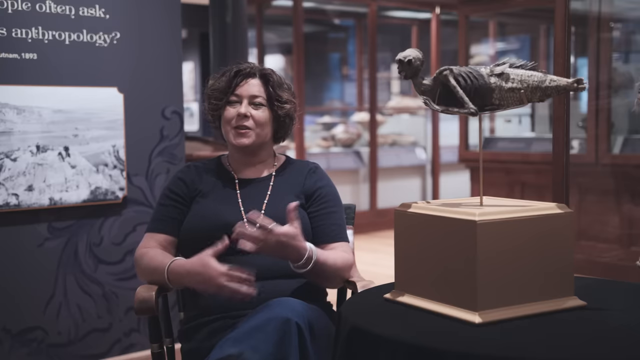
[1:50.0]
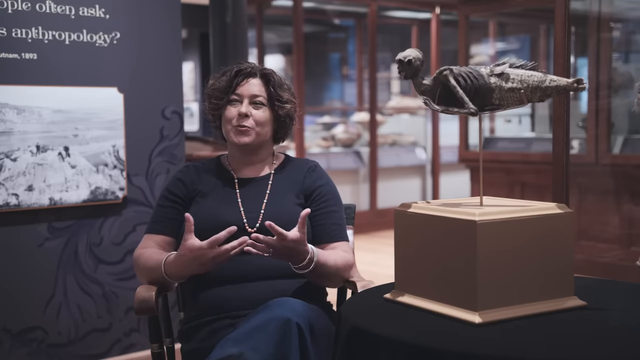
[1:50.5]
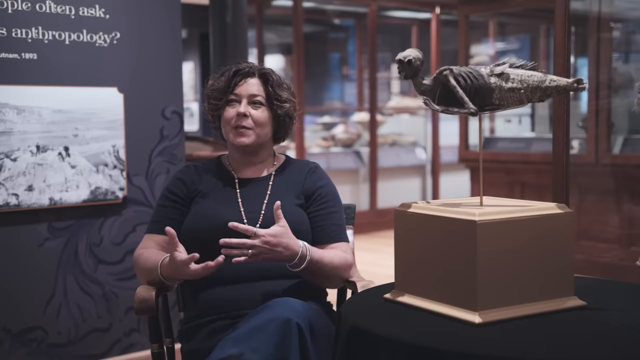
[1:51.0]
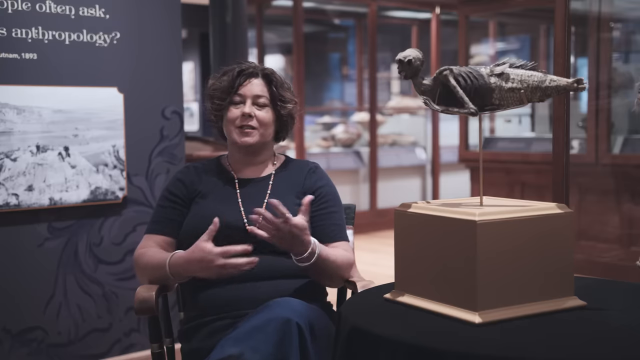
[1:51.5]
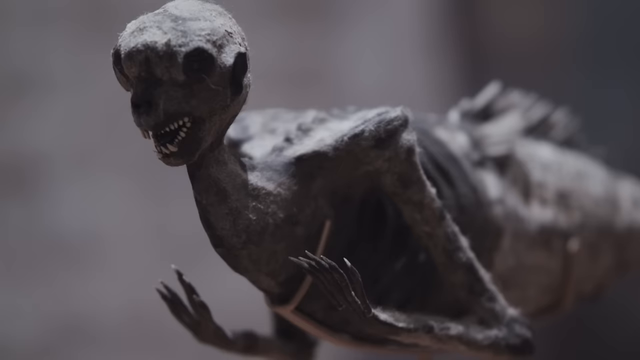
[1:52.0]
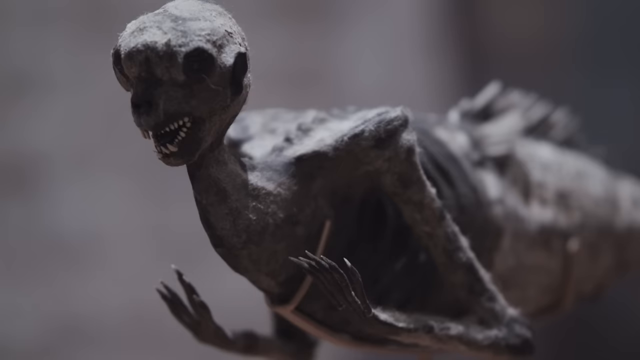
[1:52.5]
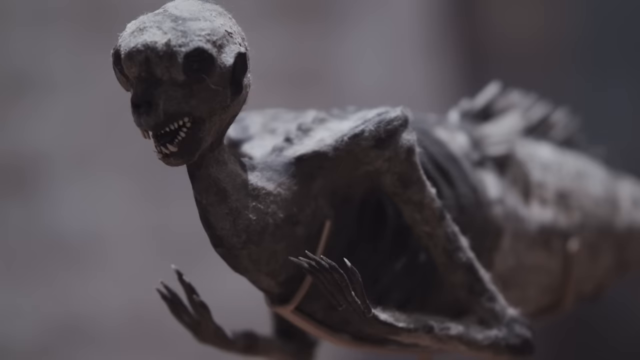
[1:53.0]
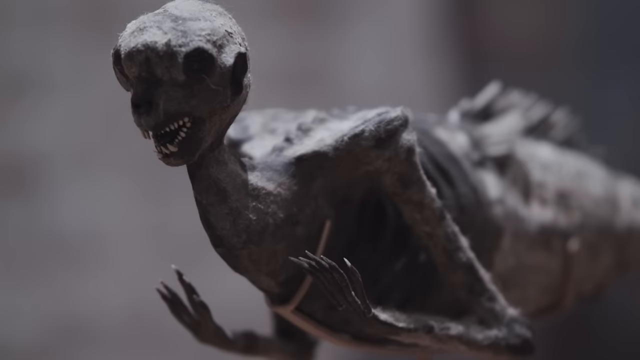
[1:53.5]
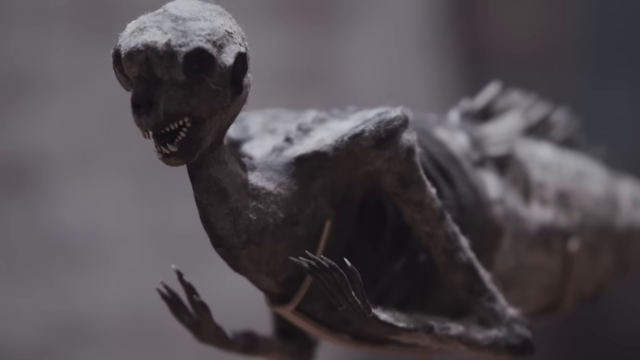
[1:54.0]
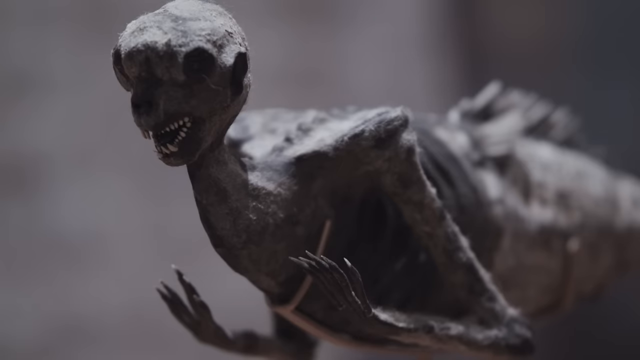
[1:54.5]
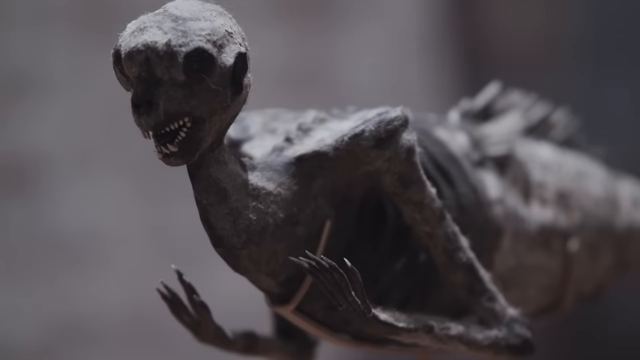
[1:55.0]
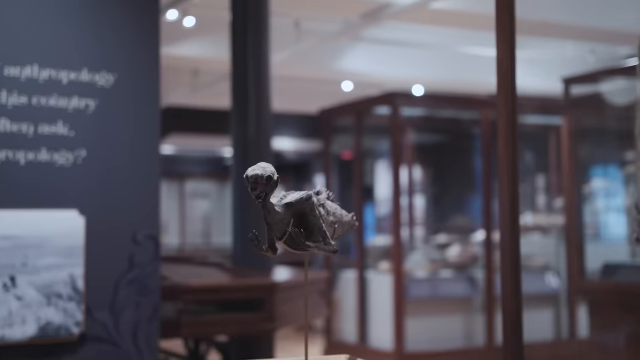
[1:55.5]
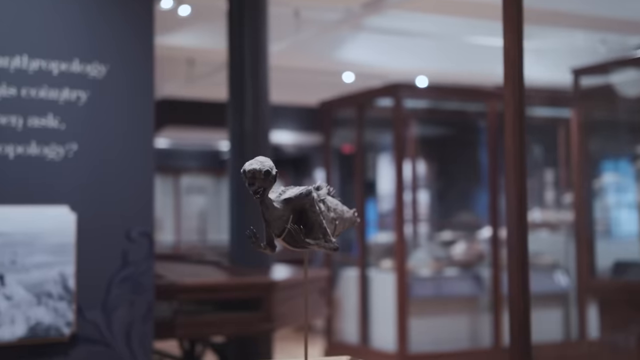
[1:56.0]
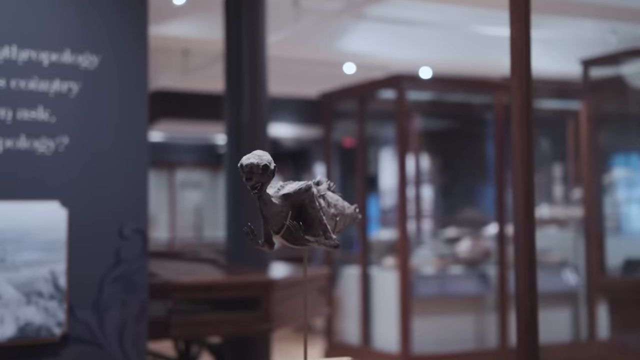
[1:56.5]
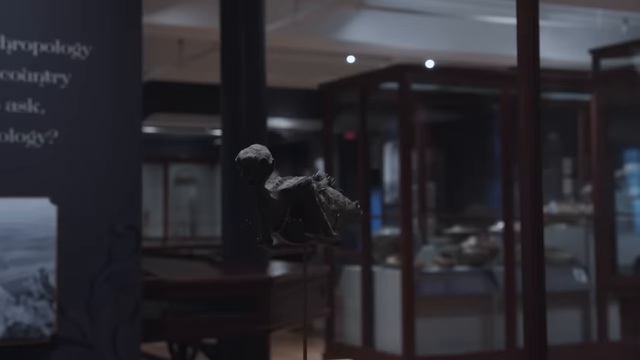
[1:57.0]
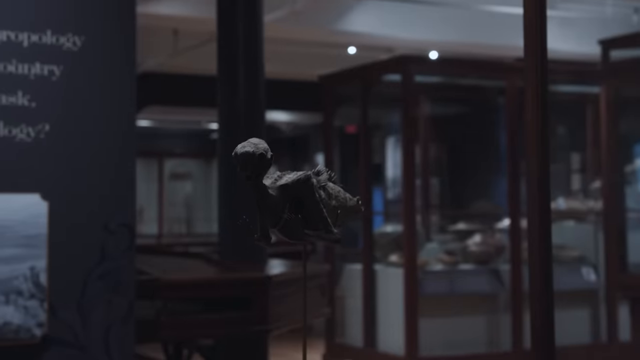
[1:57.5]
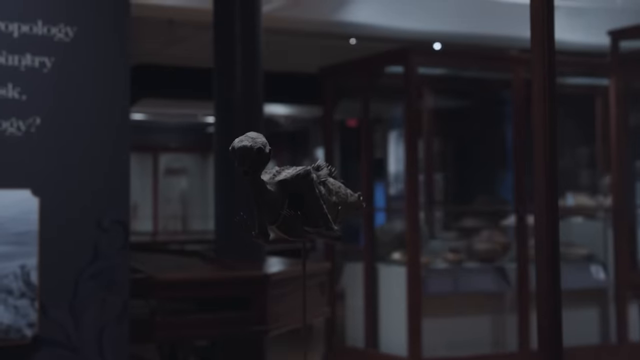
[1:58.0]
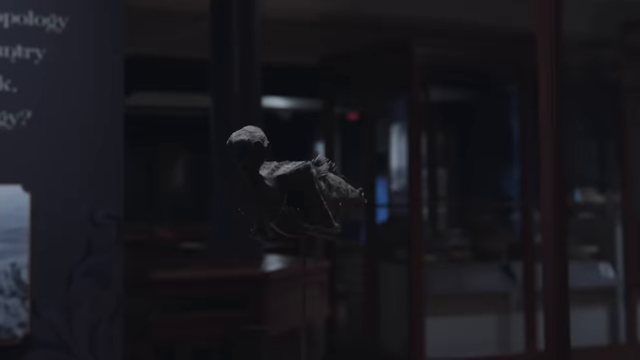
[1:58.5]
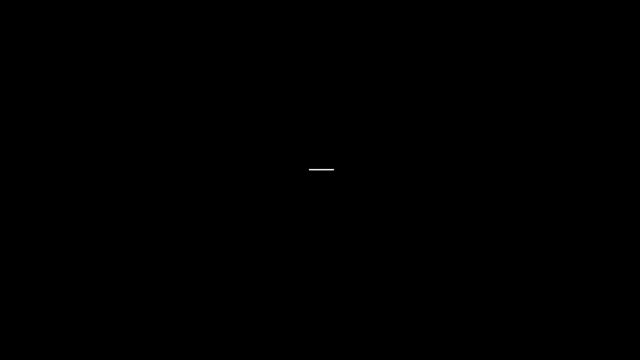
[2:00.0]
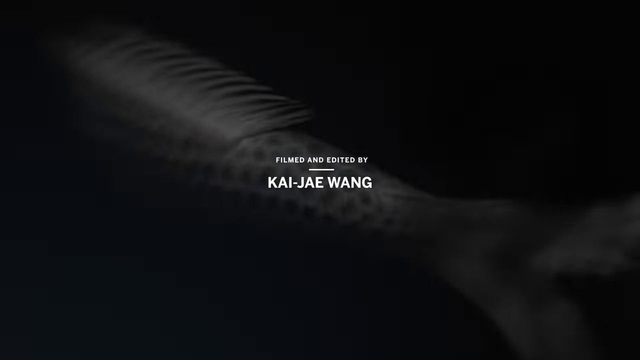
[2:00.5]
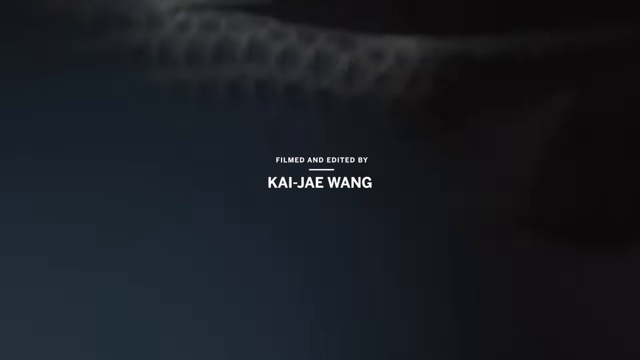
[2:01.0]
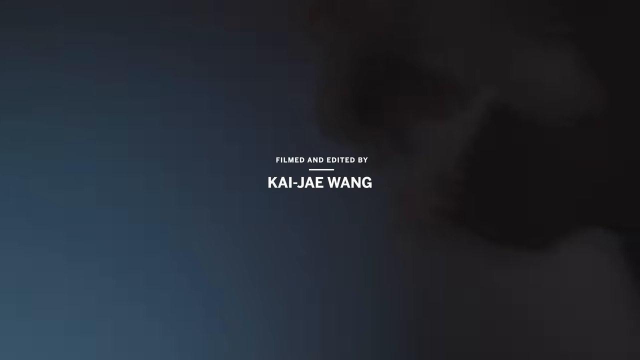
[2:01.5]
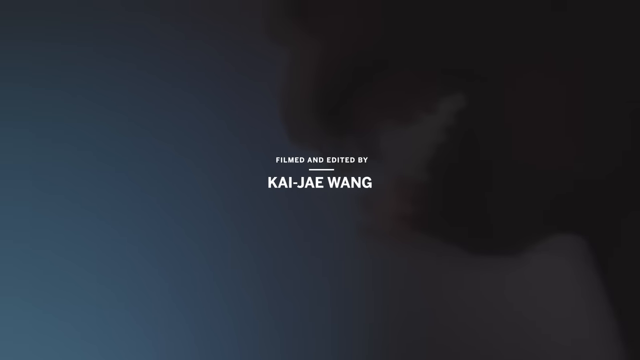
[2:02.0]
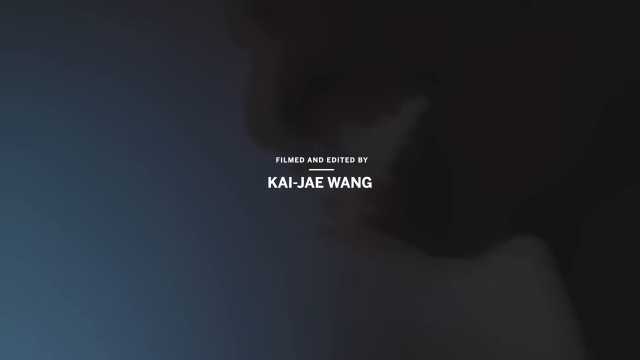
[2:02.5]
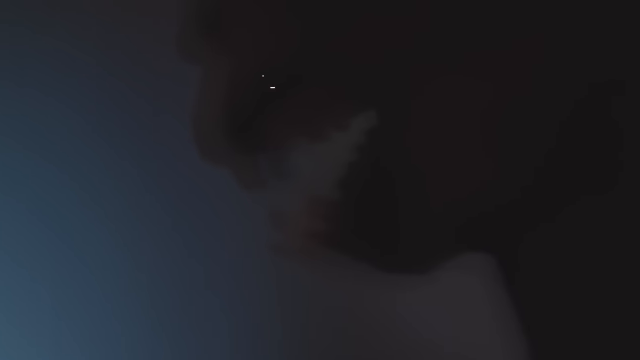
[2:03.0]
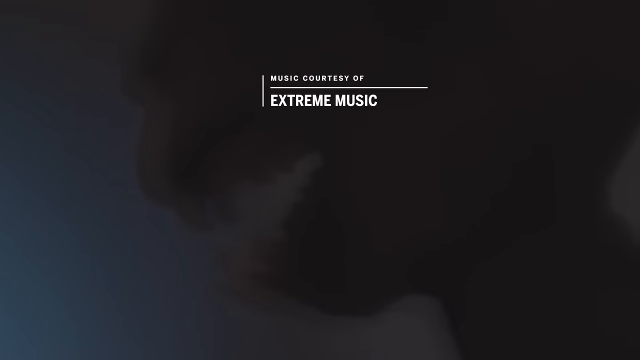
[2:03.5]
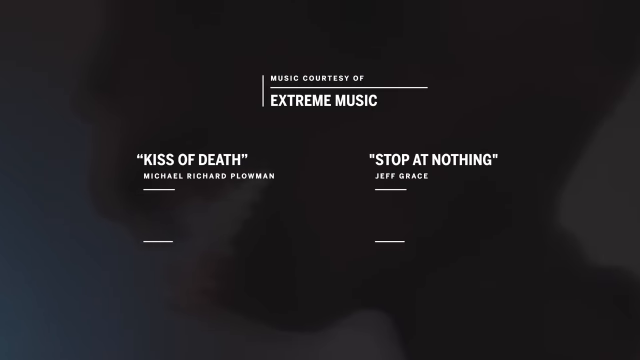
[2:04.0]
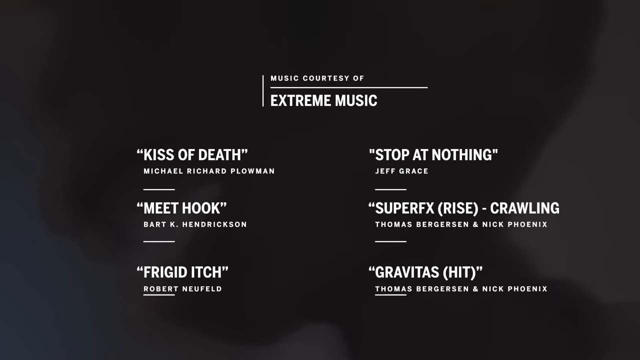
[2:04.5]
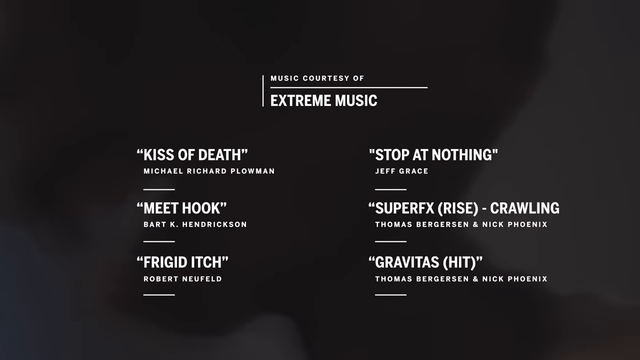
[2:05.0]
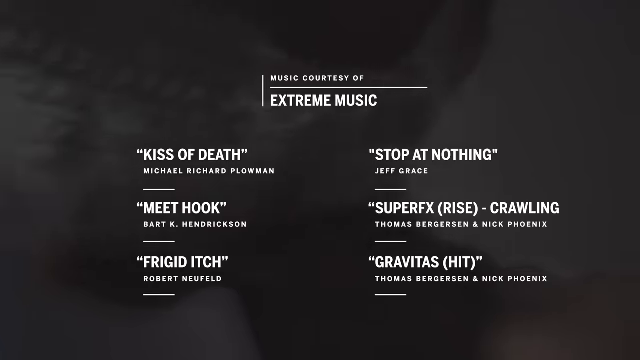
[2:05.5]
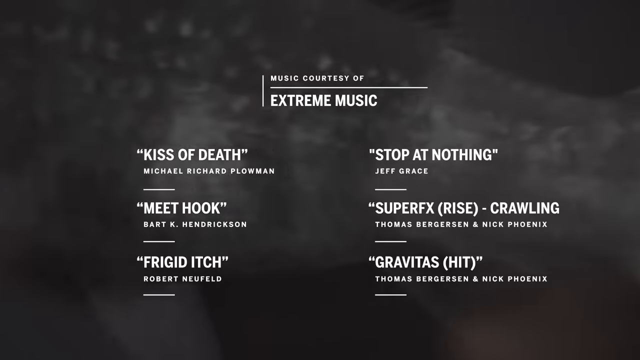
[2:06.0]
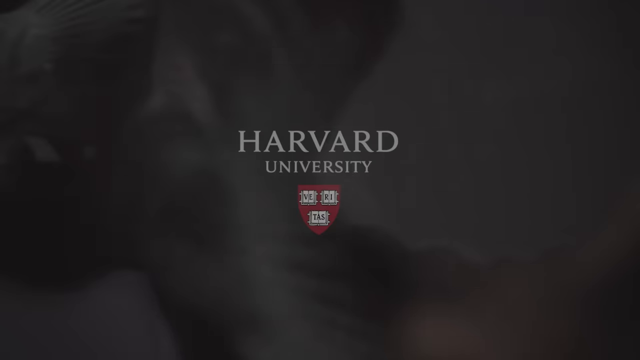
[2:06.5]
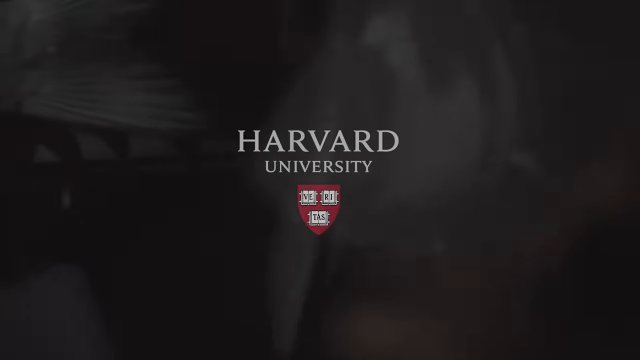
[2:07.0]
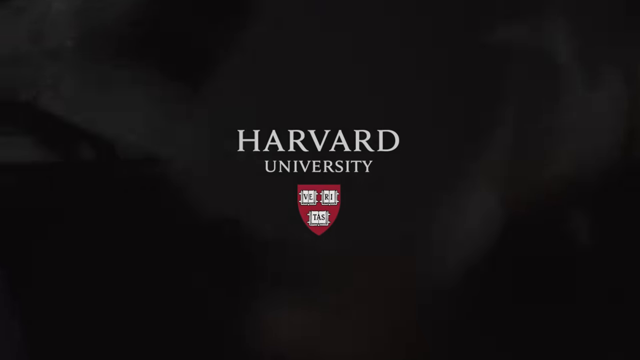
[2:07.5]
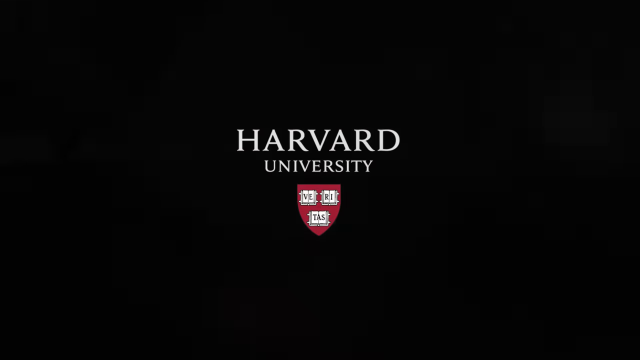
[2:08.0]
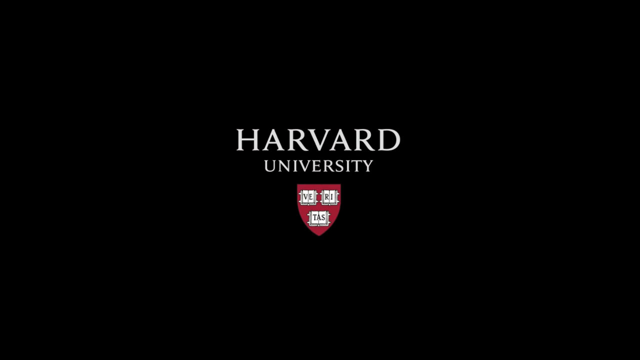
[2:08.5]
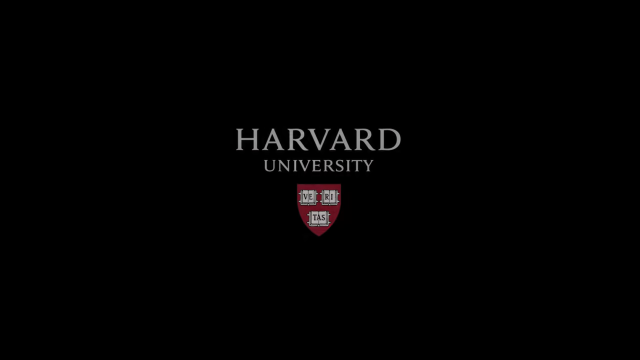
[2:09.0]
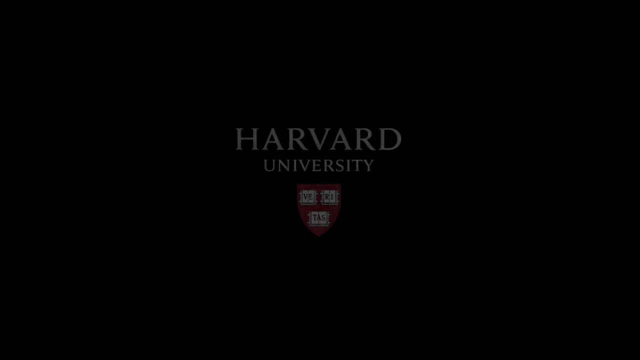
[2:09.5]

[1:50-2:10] The camera focuses on the object from a side view as everything gets darker, as if the lights in a museum were being turned off, until the screen is black. Text reads "filmed and edited by Kai Jae Wang." Things are then seen swimming, and the text "music courtesy of Extreme Music" appears, followed by "Kiss of Death by Michael Richard Plowman," "Stop at Nothing by Jeff Grace," and "Meat Hook," "Super FX," "Rise," "Crawlin'." The video ends with "Harvard University" and what appears to be a red shield with three white sections like boxes.